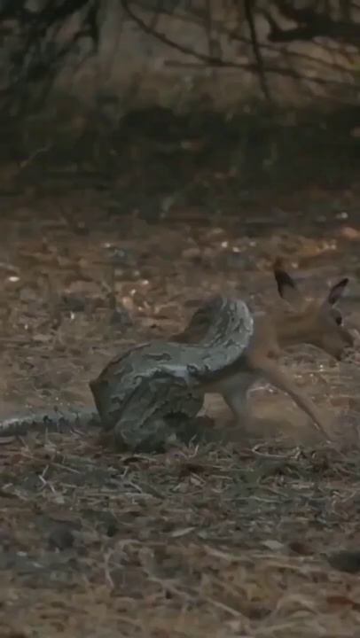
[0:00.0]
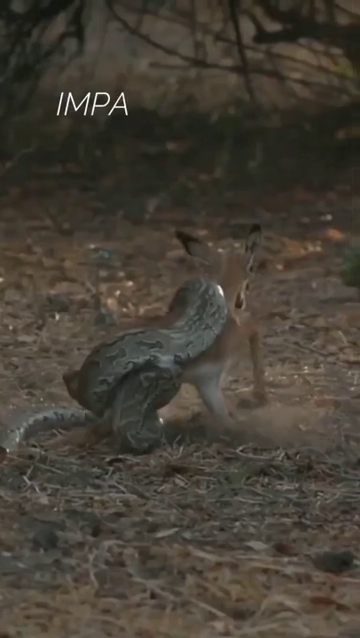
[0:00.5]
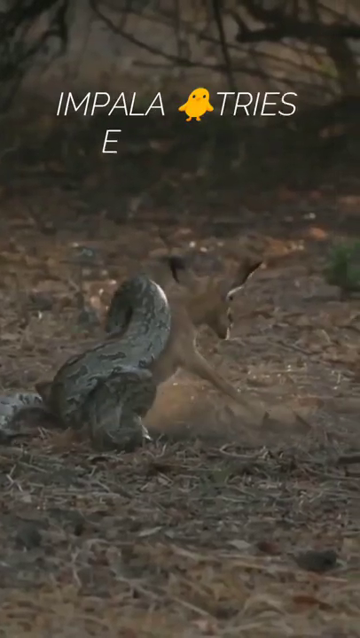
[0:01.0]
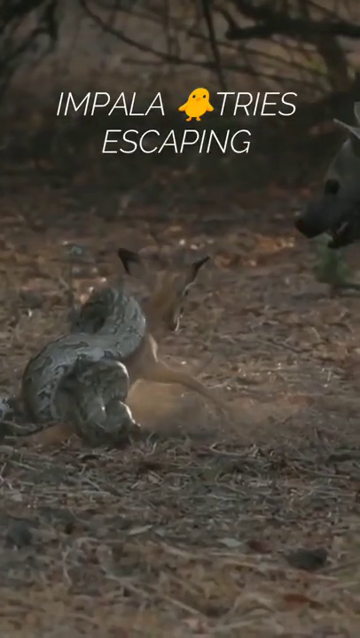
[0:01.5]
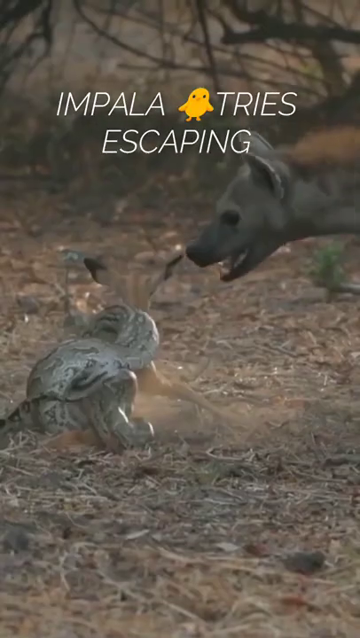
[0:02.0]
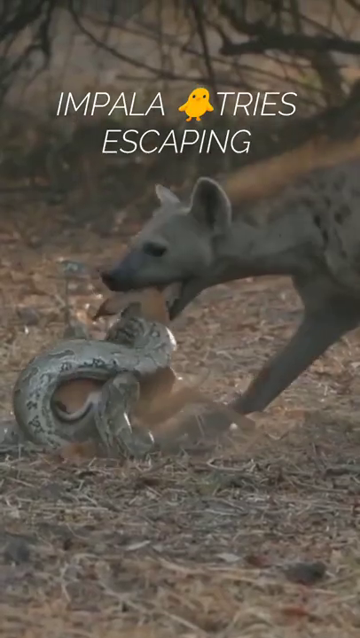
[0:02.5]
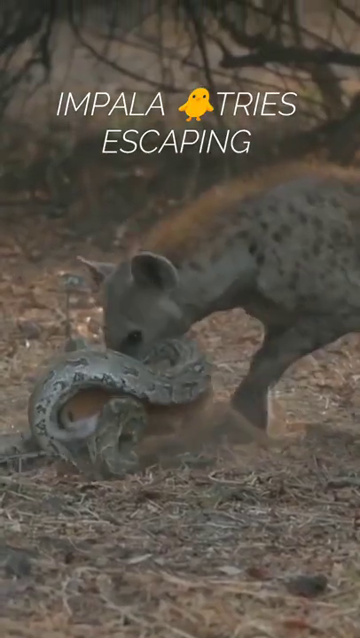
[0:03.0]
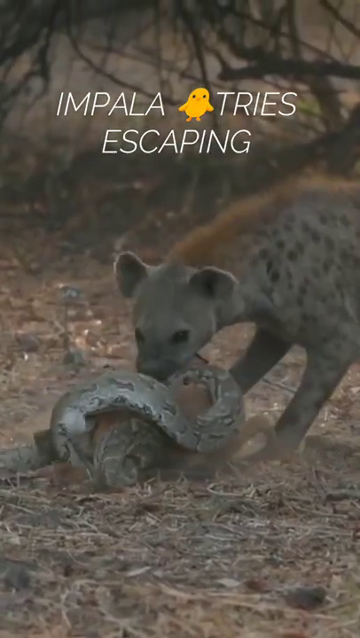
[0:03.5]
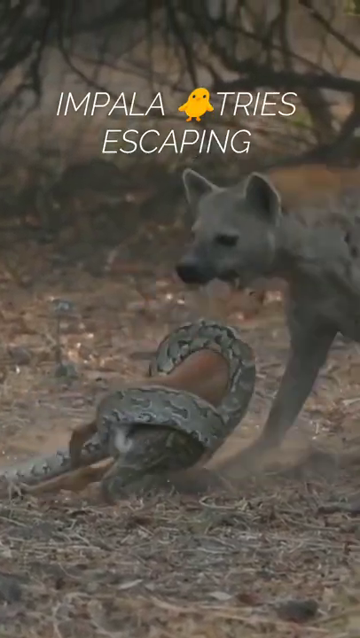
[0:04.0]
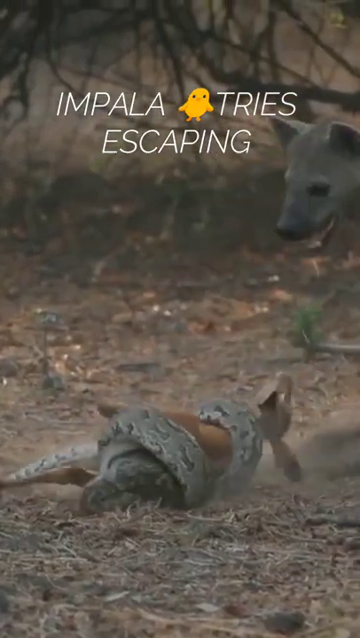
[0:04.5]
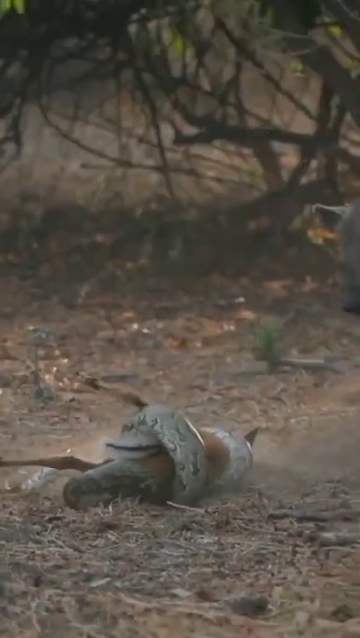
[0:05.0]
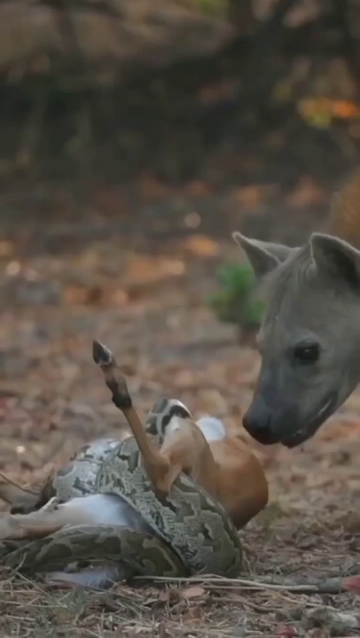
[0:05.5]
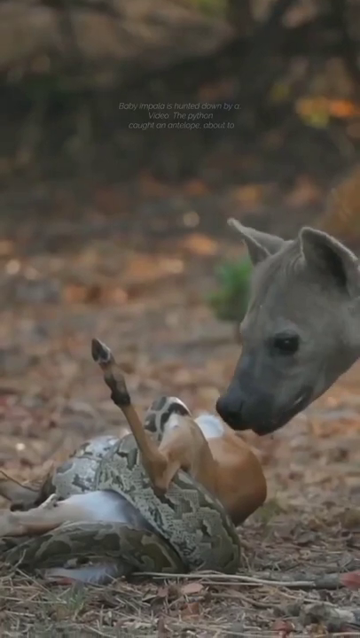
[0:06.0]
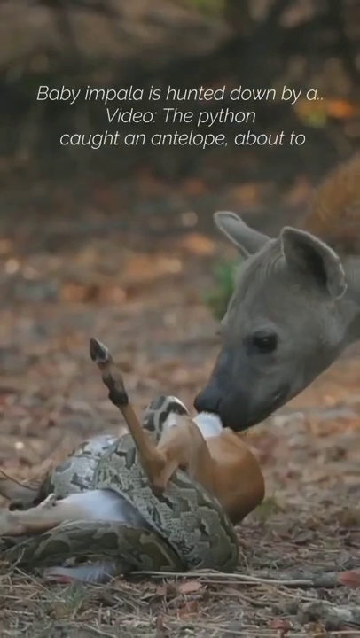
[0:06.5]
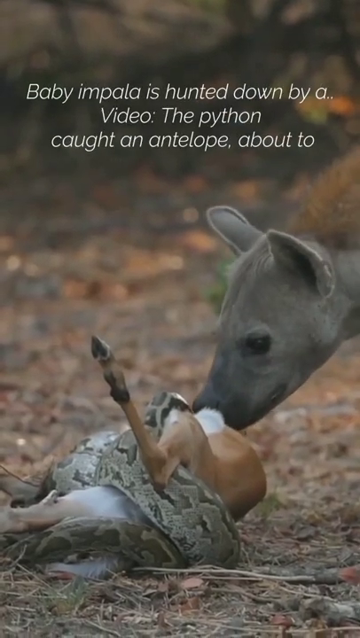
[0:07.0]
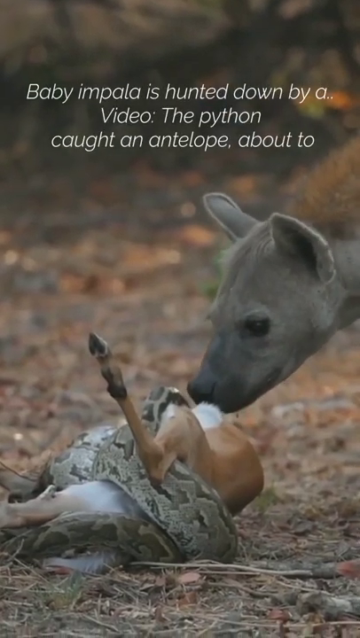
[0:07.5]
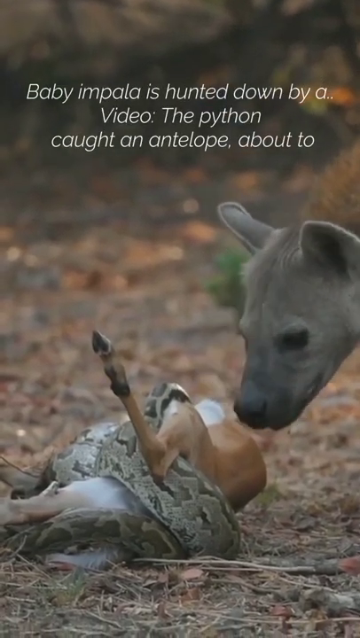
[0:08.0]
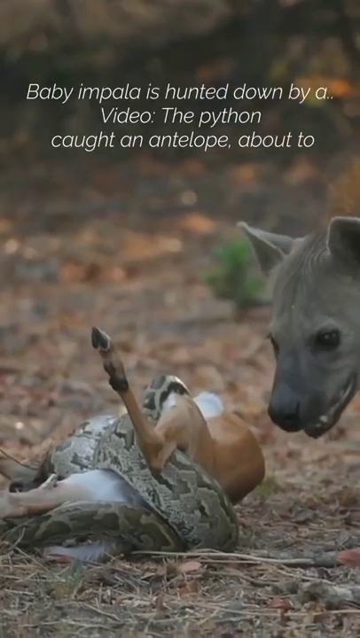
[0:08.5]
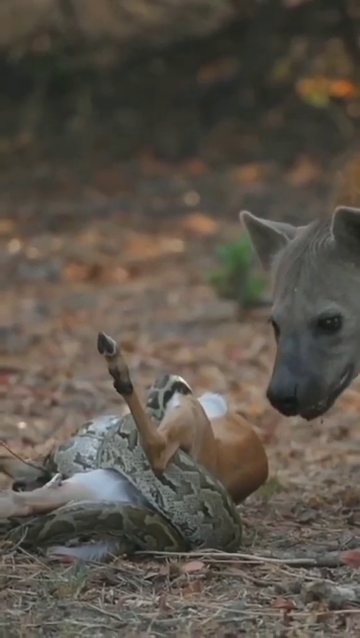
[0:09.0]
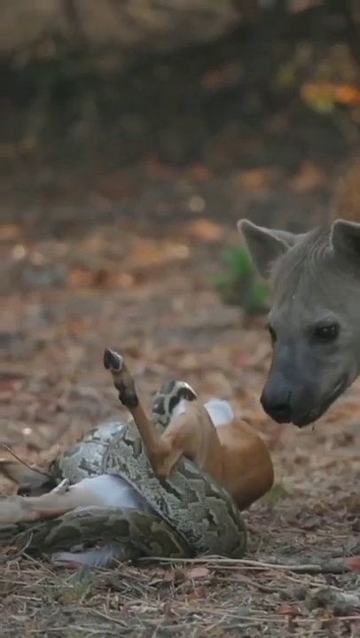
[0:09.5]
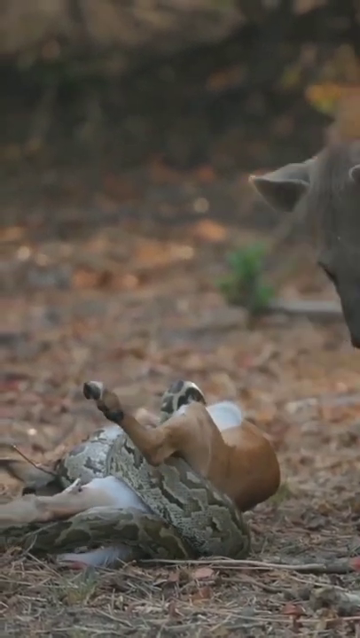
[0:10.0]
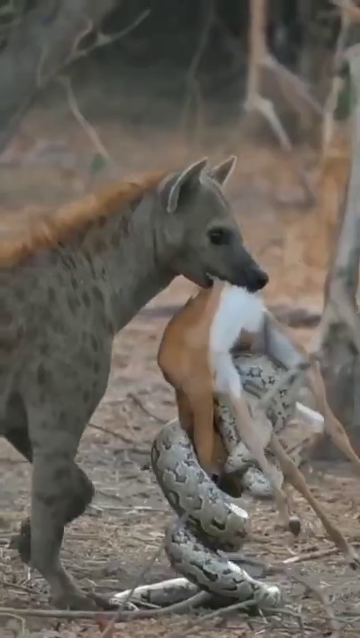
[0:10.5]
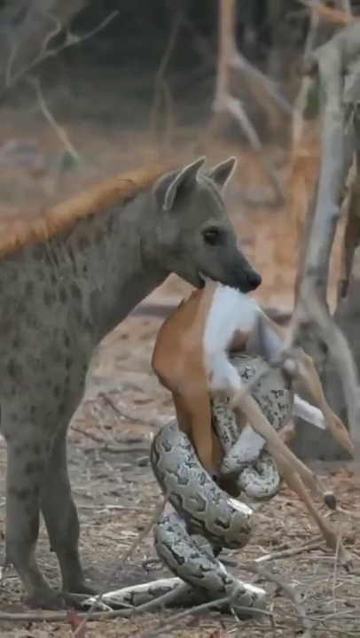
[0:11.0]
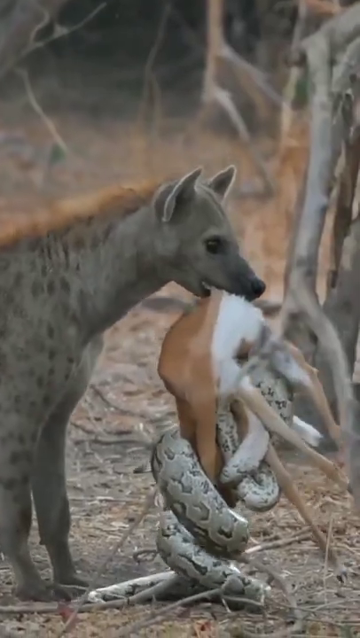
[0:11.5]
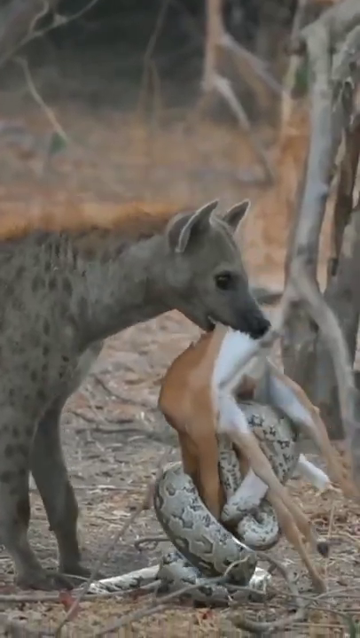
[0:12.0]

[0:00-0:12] A small impala has a very large snake wrapped around it, and the impala is trying to get away. A hyena comes into the shot and opens its mouth wide over the impala. Text across the screen reads "impala tries escaping." The shot then changes, and text appears beginning "baby impala is hunted down by," followed by words including "the python caught an antelope" that do not form a coherent sentence. The hyena sniffs the impala, and then the hyena is shown with the impala in its mouth while the snake is still wrapped around it.